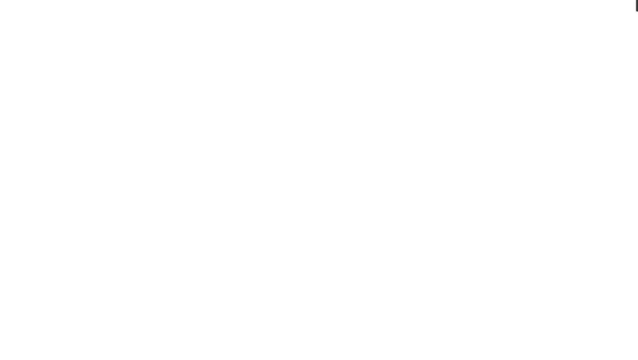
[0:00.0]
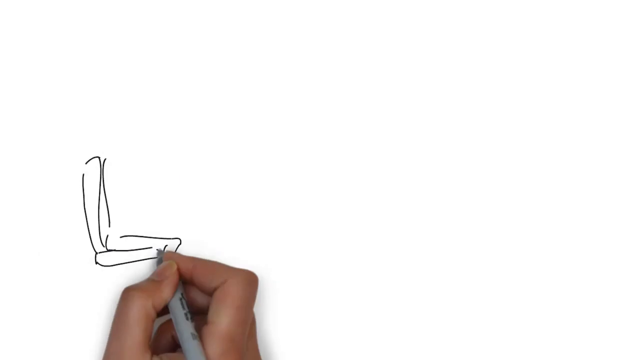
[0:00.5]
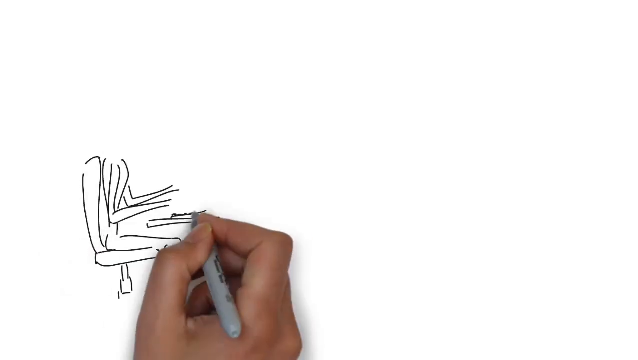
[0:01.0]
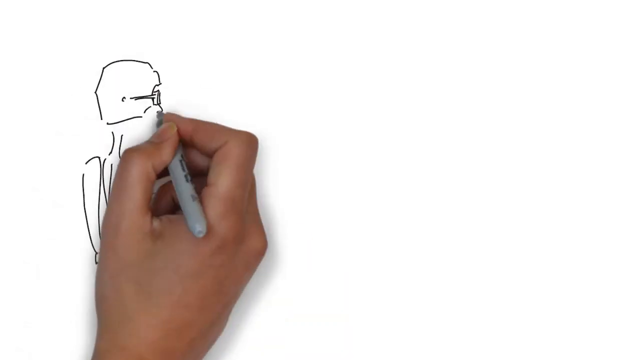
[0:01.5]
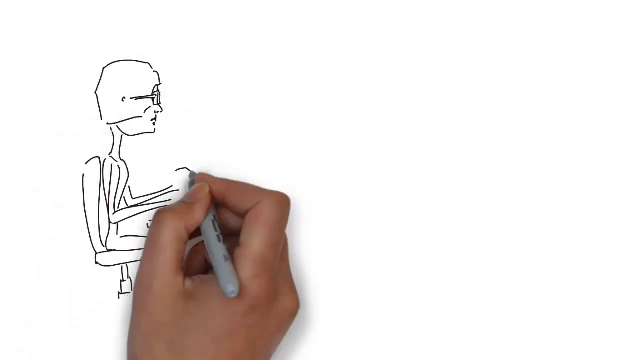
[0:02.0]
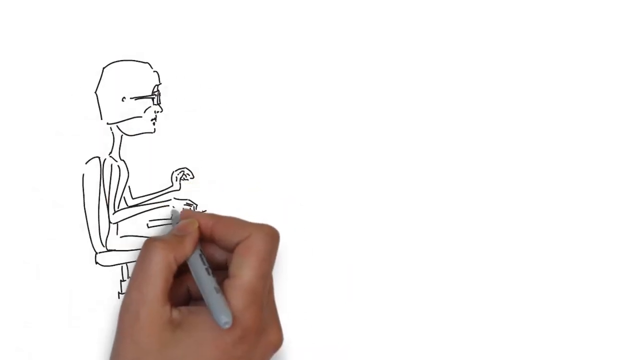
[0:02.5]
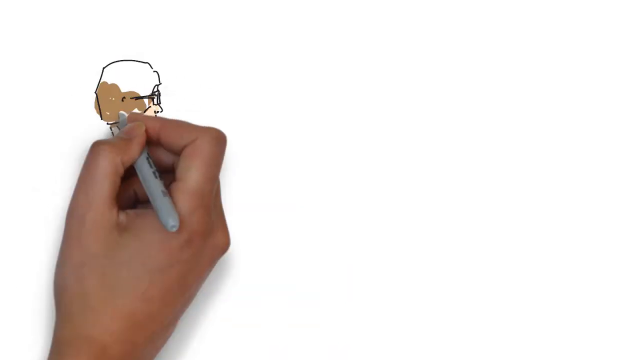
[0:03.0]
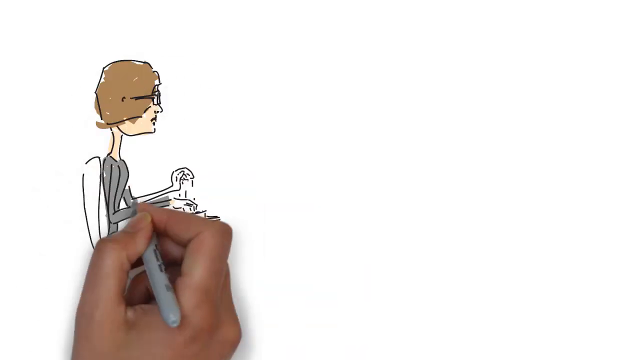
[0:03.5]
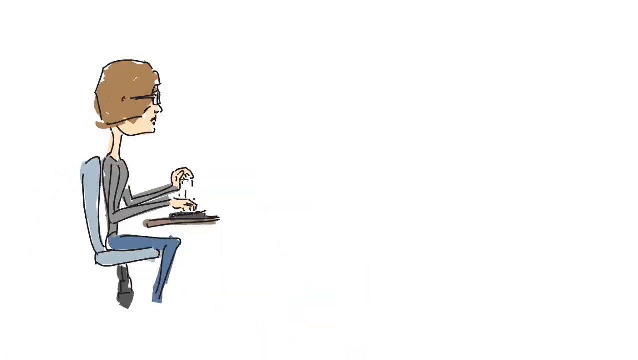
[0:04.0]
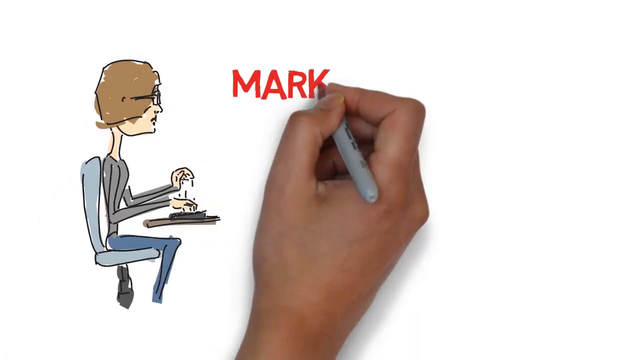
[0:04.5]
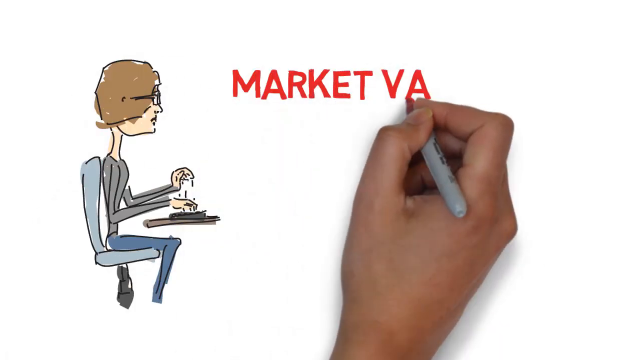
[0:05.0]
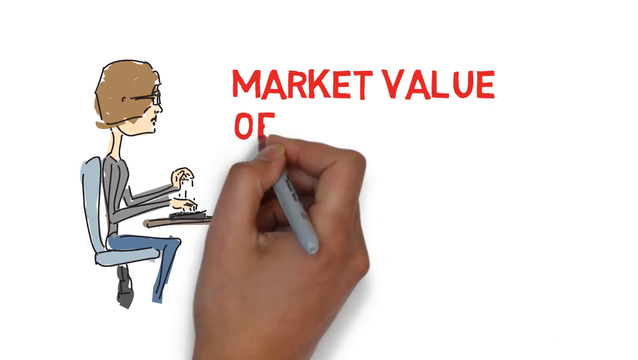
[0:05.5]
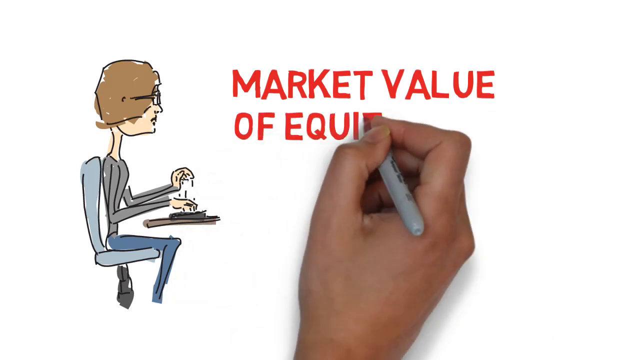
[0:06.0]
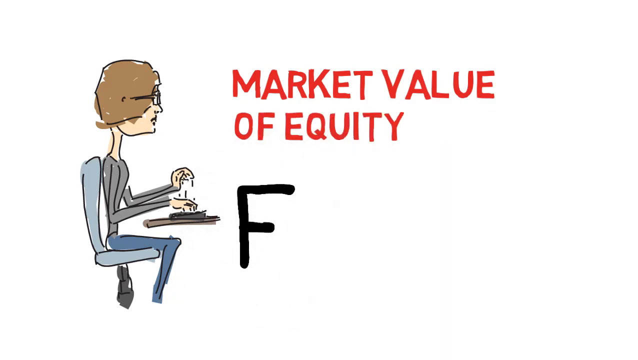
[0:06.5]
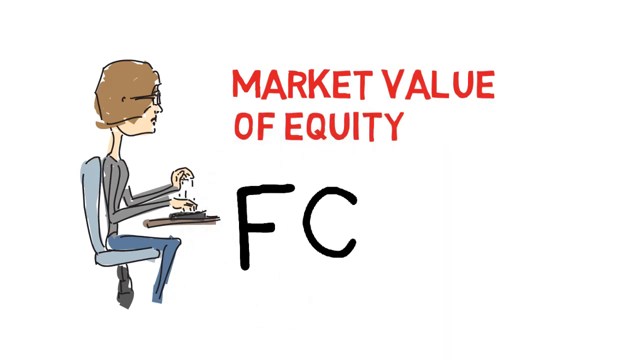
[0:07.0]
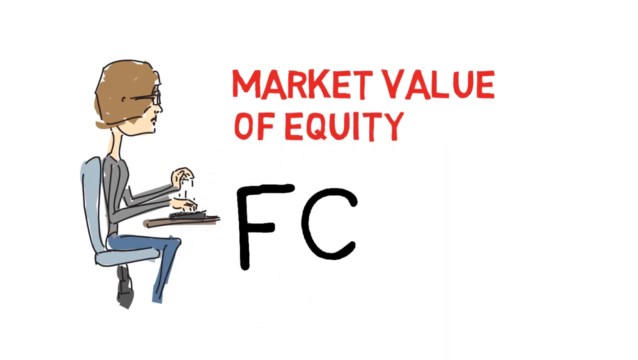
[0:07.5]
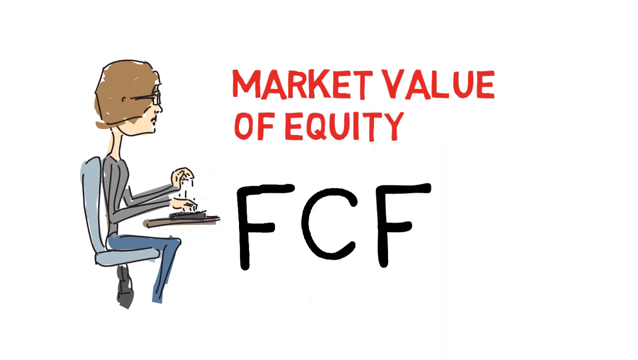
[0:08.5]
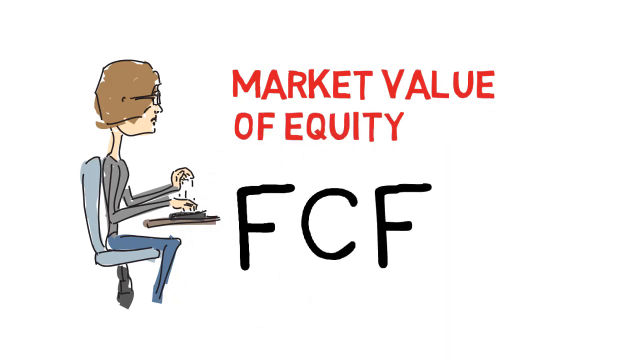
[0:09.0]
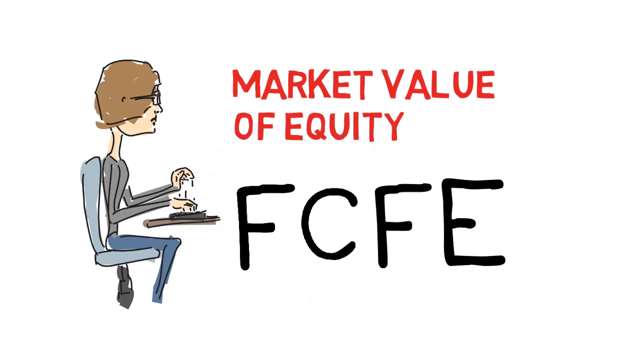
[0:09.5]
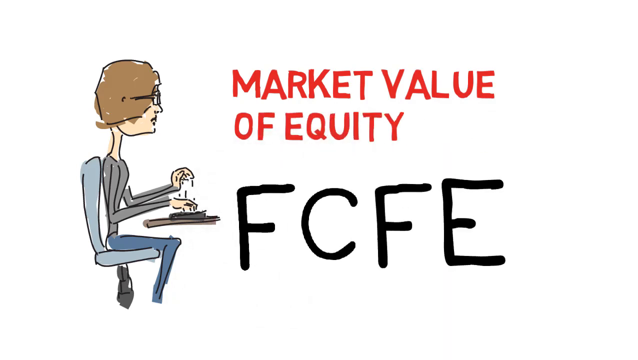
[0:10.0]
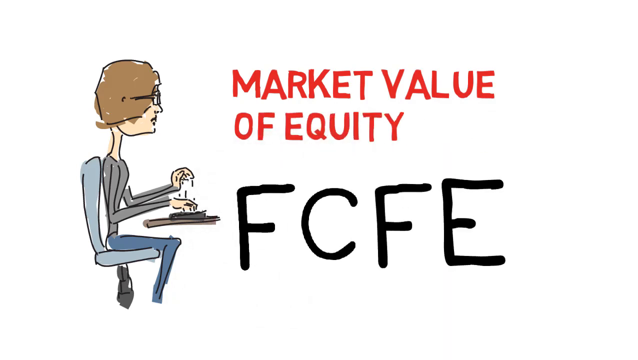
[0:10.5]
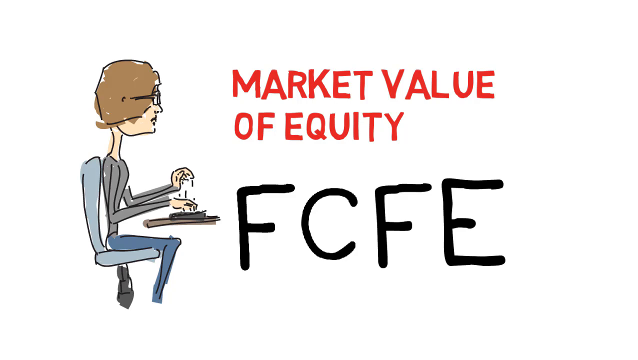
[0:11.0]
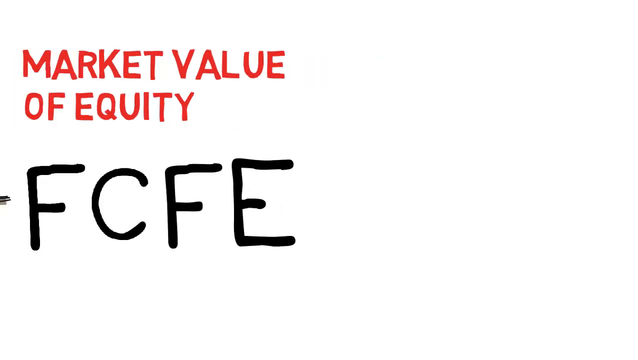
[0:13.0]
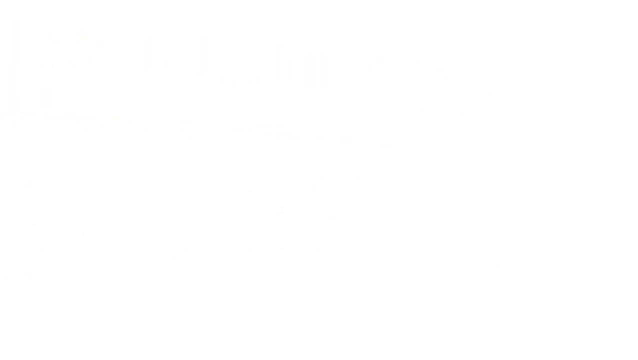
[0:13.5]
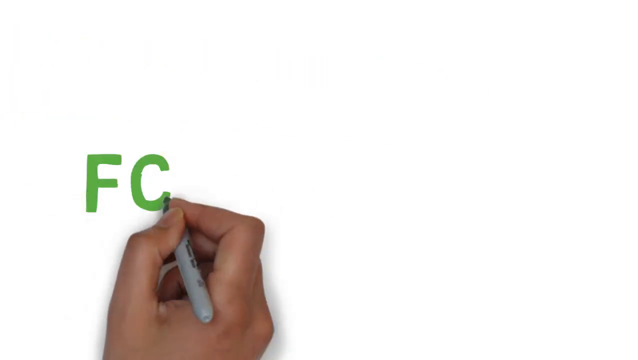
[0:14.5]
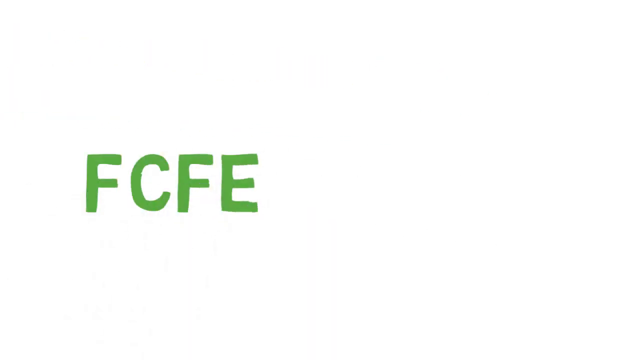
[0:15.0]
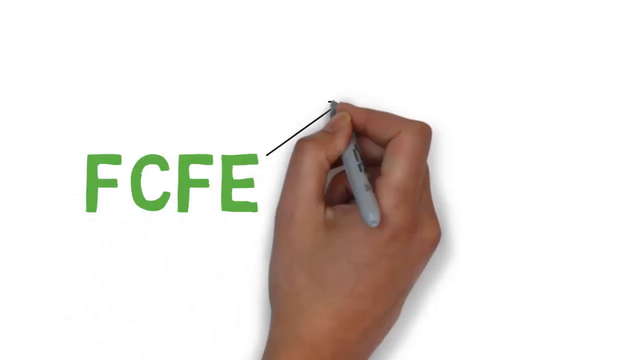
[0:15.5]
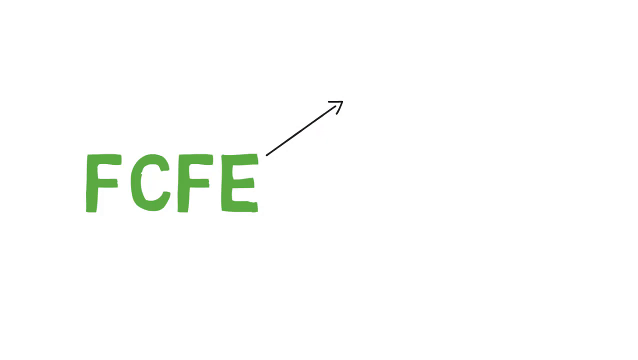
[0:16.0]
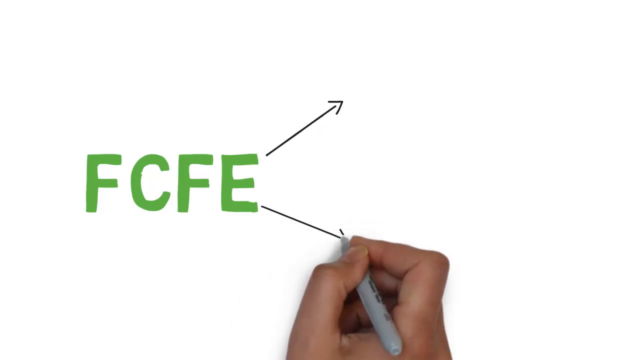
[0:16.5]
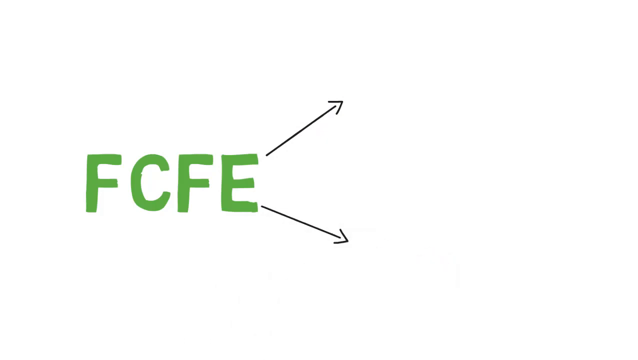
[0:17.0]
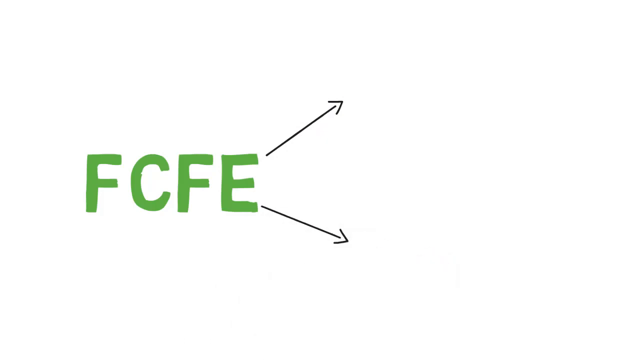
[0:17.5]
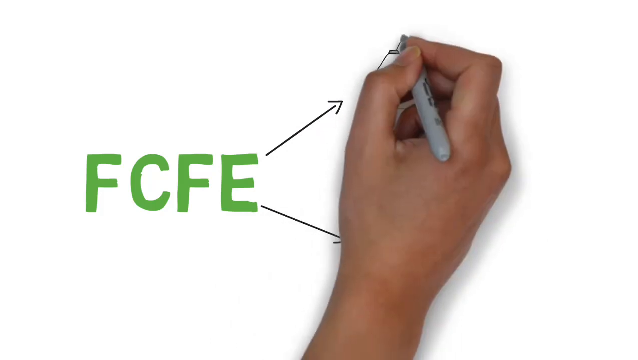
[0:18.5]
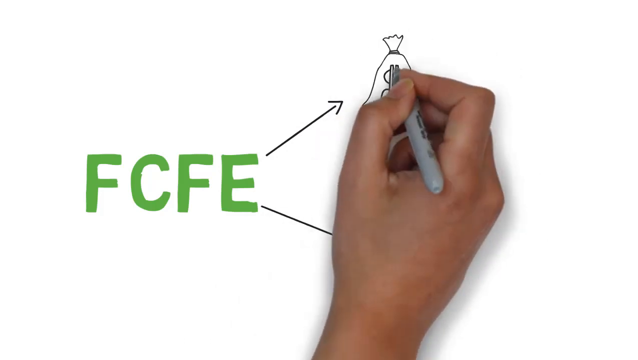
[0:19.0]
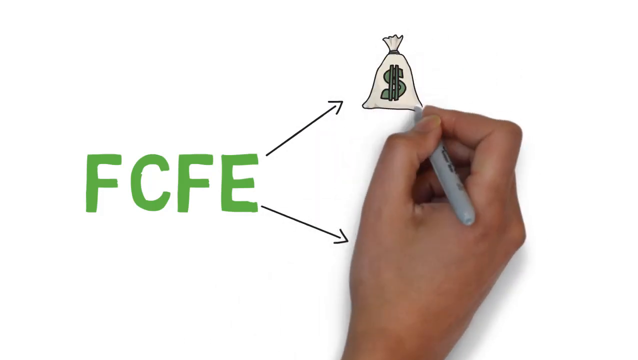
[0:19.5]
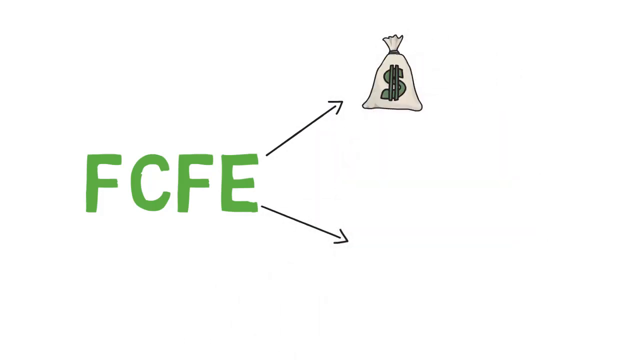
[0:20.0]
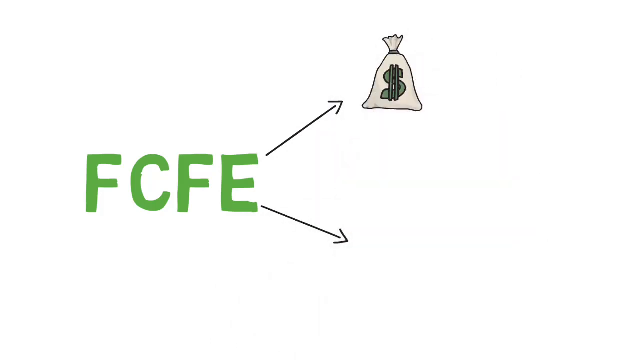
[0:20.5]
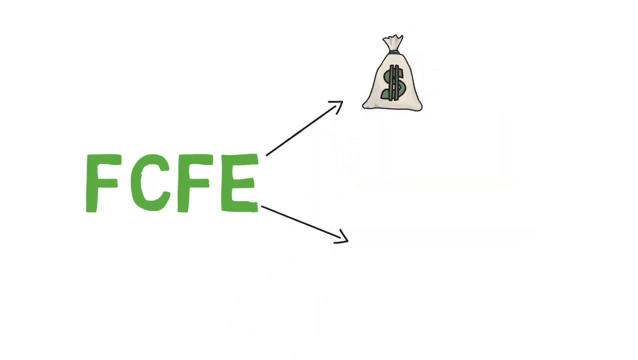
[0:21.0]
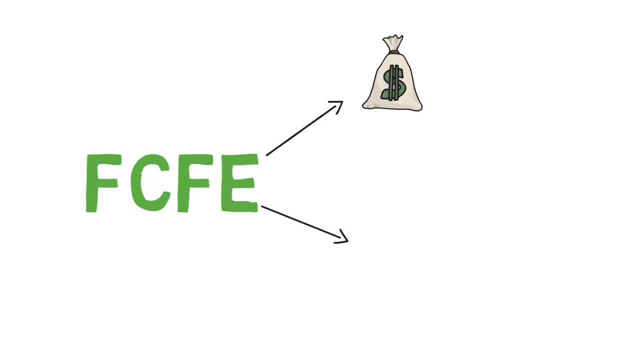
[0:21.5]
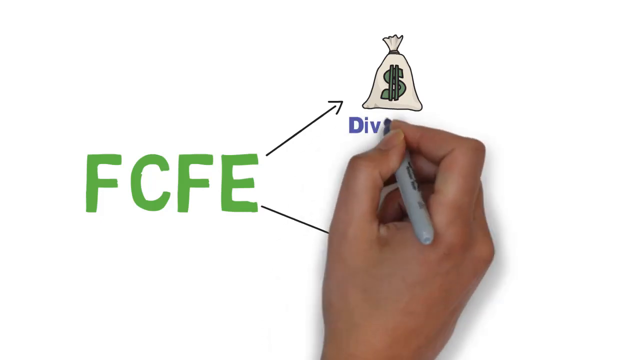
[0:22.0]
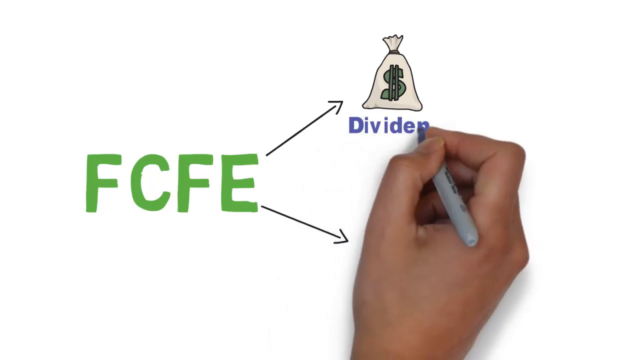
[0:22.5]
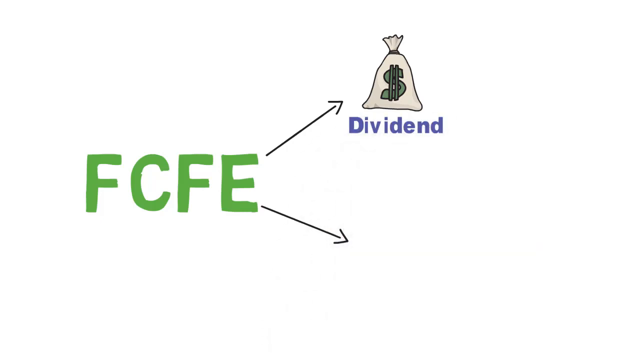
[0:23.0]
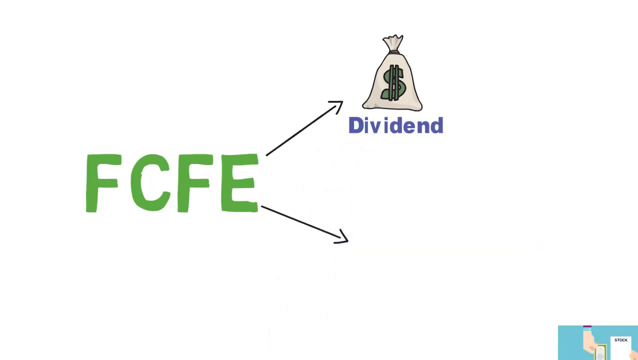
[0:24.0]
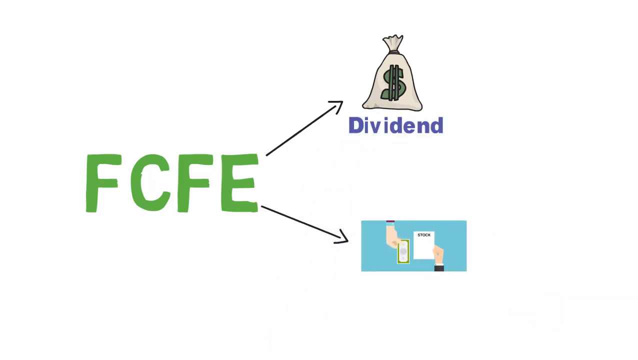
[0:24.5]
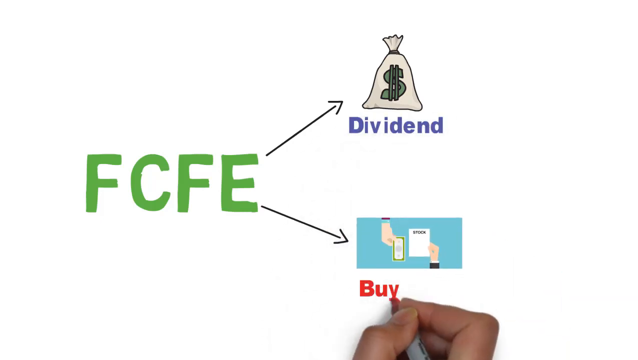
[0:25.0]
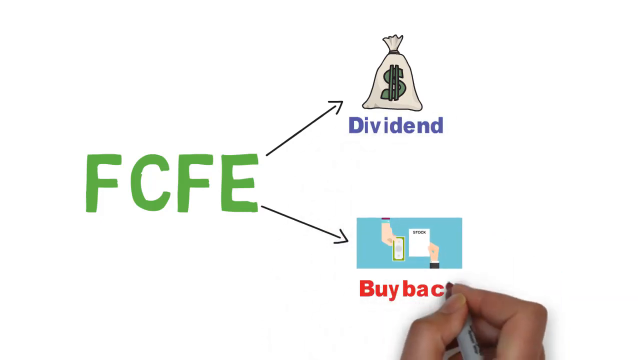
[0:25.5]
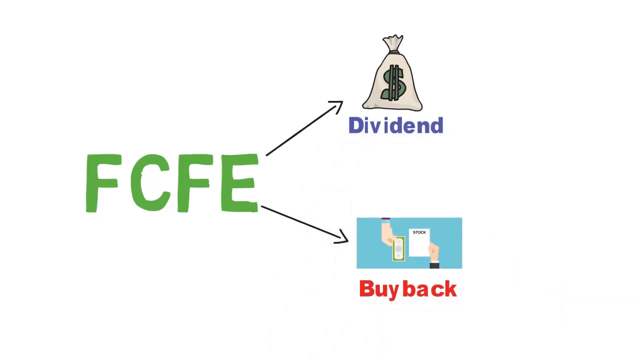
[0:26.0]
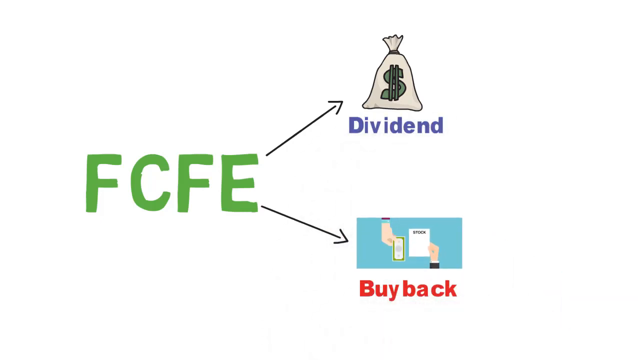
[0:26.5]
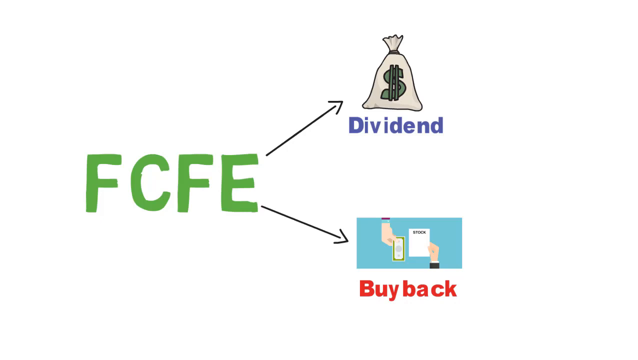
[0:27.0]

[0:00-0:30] On a white background, a hand draws in black a person wearing glasses who sits at a blue chair and types on a keyboard. The colors are kind of drawn in very sloppily, going over the edges. Red text reading "market value of equity" is written, and a black letter F appears that kind of shakes slightly; then C and F, and then E, are added. The view slides to the left of the screen and the hand comes in again, writing "FCFE" and drawing a black arrow up and a black arrow down. The hand then draws a money bag with a green money sign and writes "dividend" in purple text. A teal colored box appears showing a hand holding money and a person holding a piece of paper that says "stock", and "buy back" is written in red text.